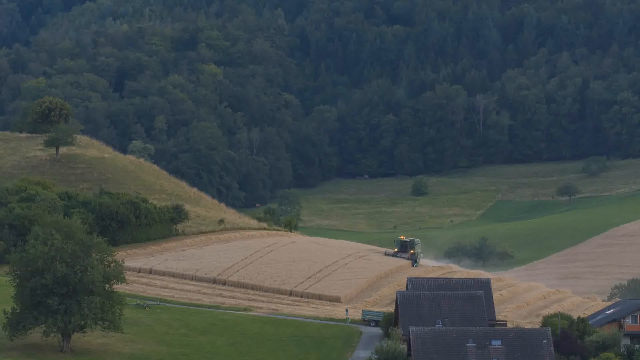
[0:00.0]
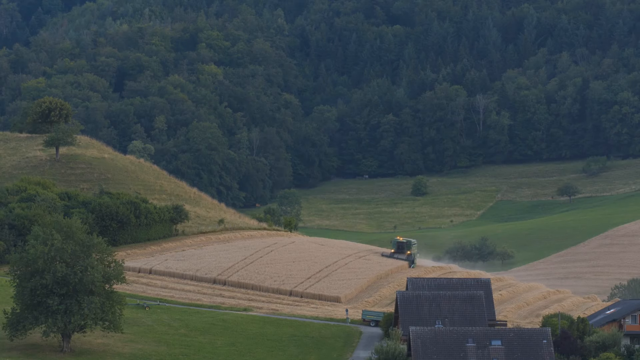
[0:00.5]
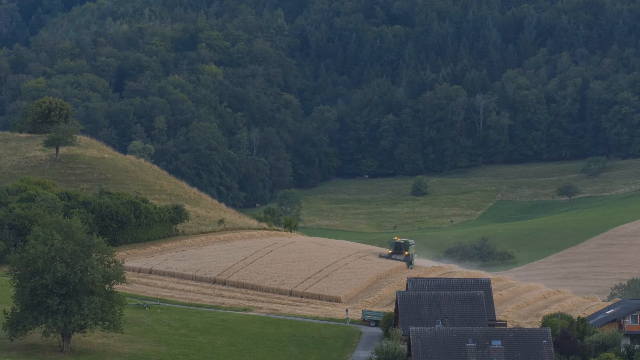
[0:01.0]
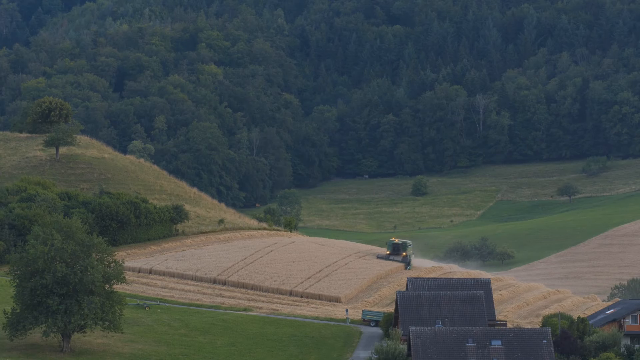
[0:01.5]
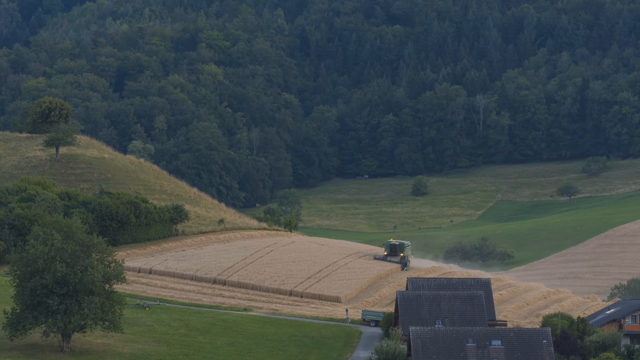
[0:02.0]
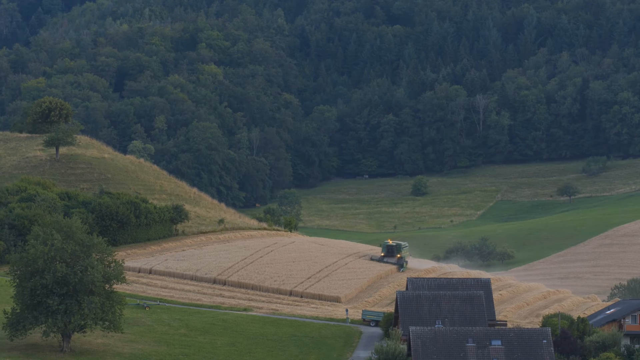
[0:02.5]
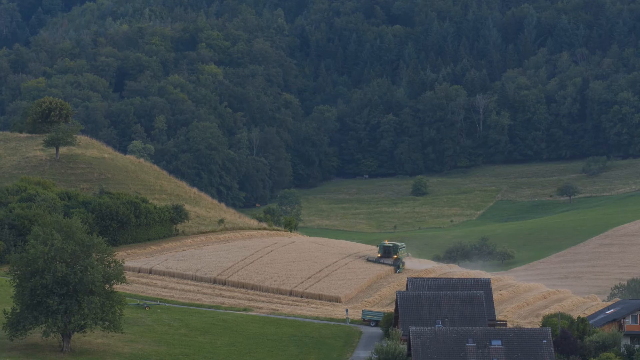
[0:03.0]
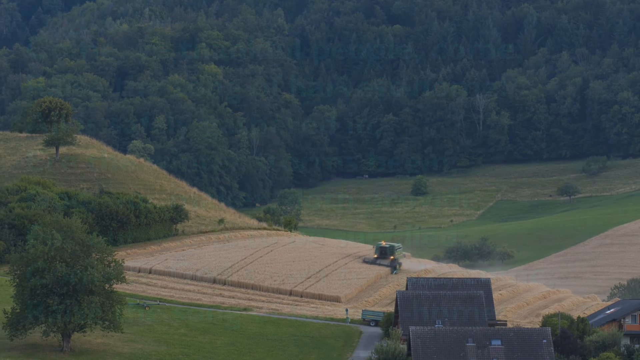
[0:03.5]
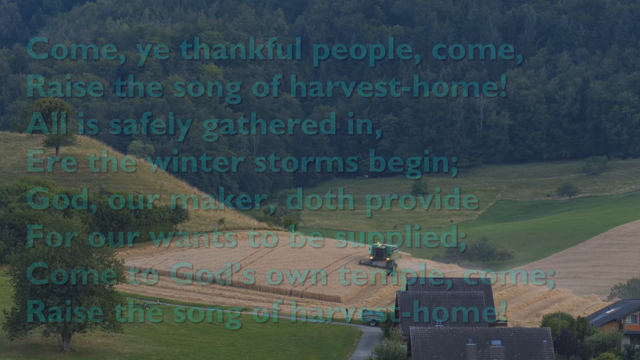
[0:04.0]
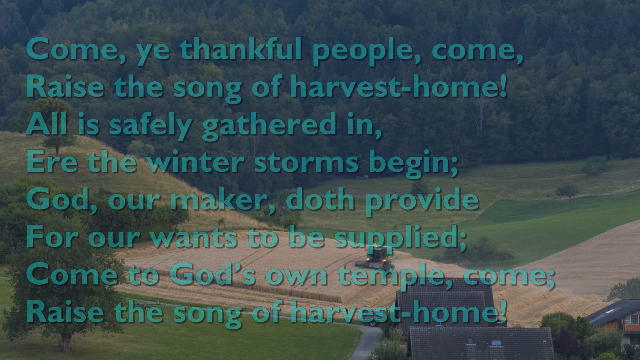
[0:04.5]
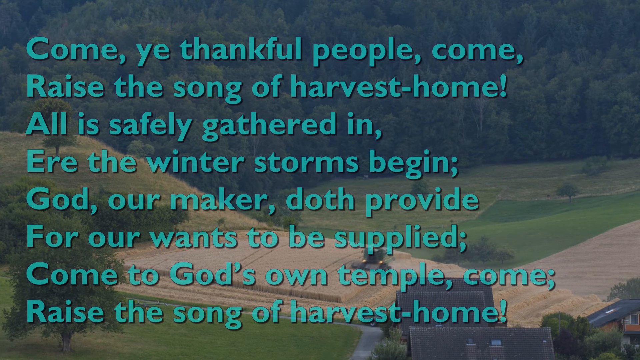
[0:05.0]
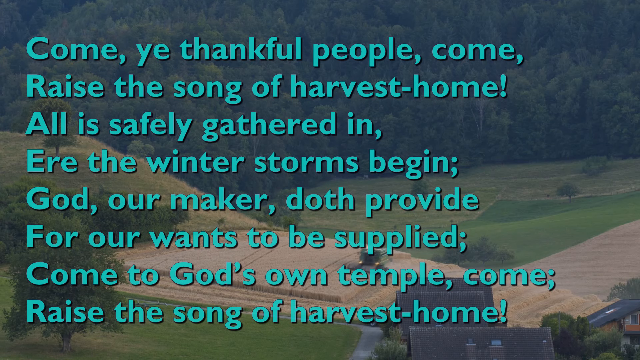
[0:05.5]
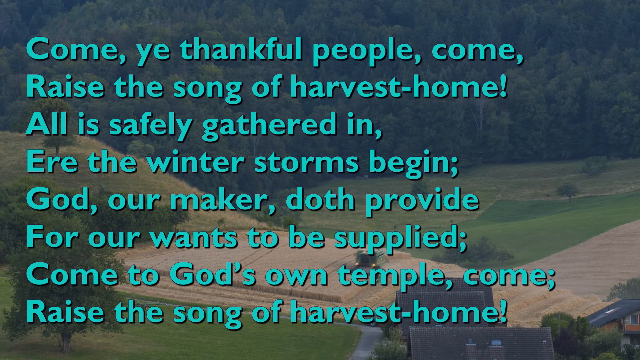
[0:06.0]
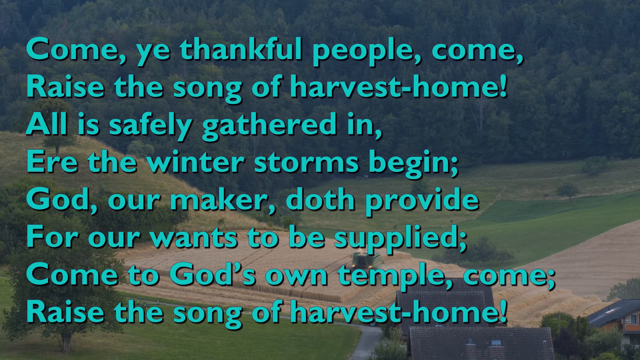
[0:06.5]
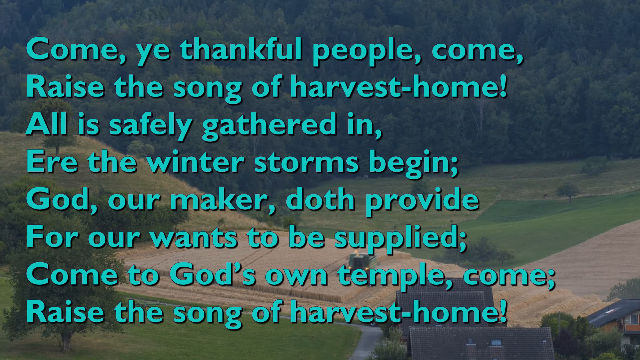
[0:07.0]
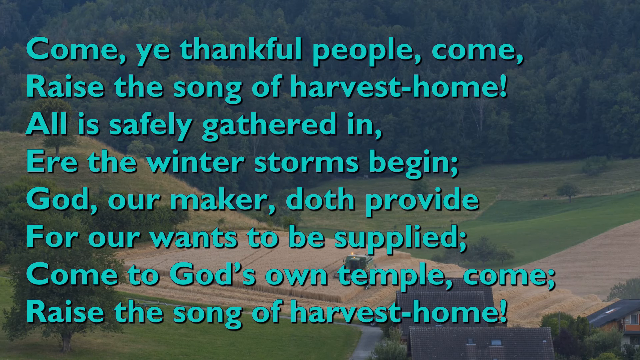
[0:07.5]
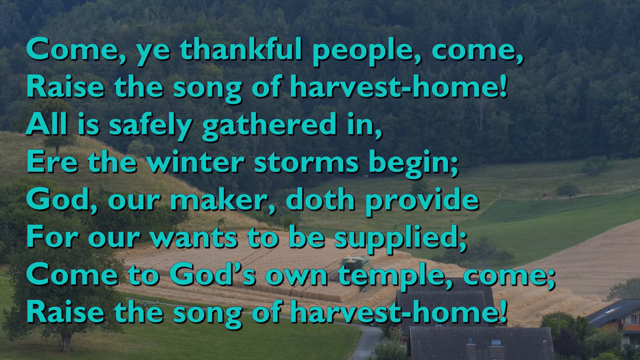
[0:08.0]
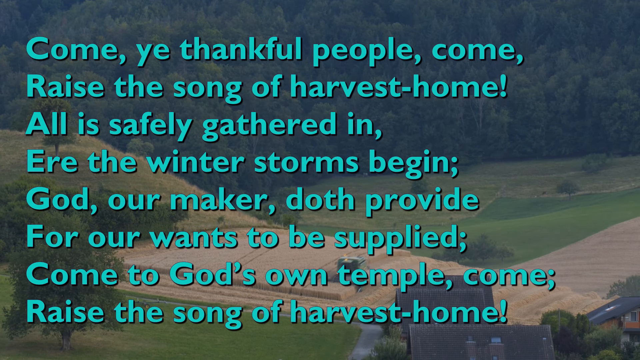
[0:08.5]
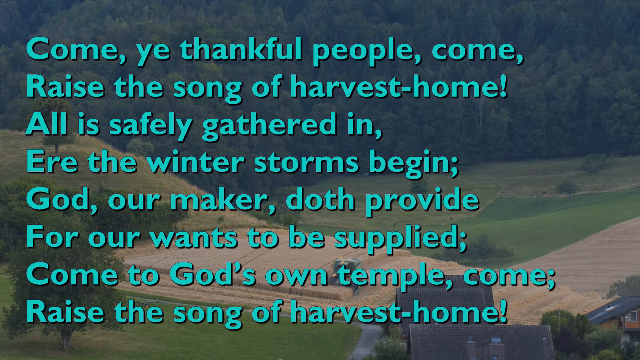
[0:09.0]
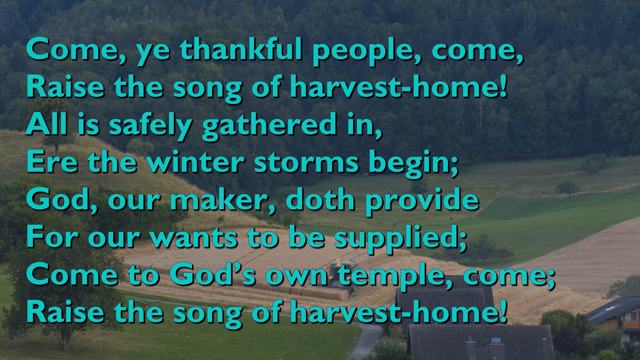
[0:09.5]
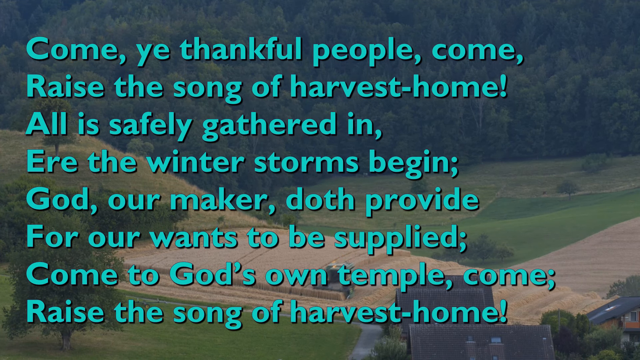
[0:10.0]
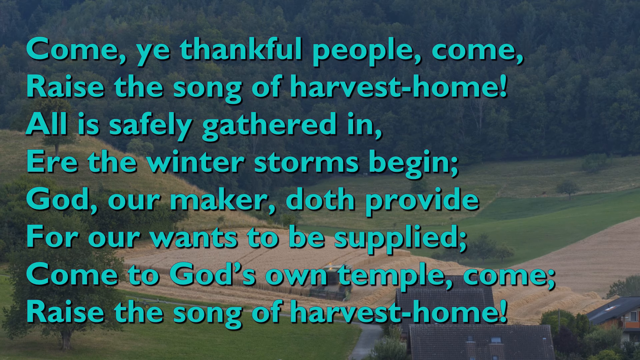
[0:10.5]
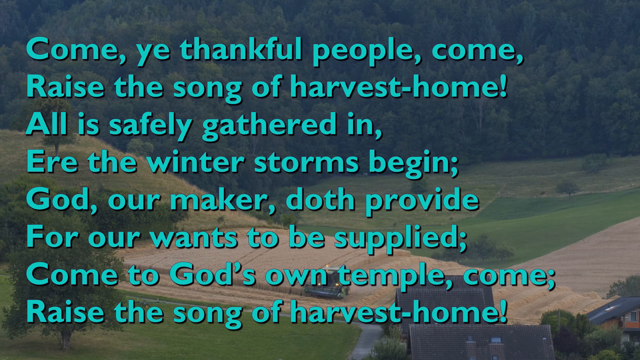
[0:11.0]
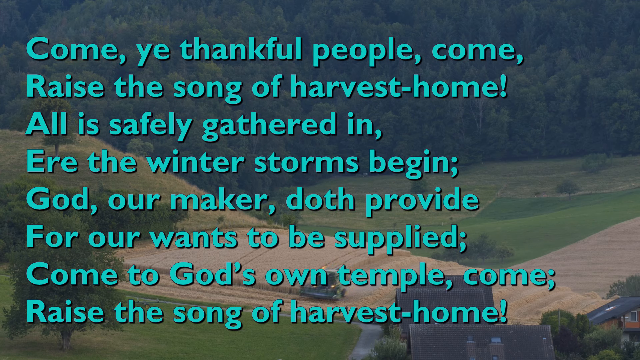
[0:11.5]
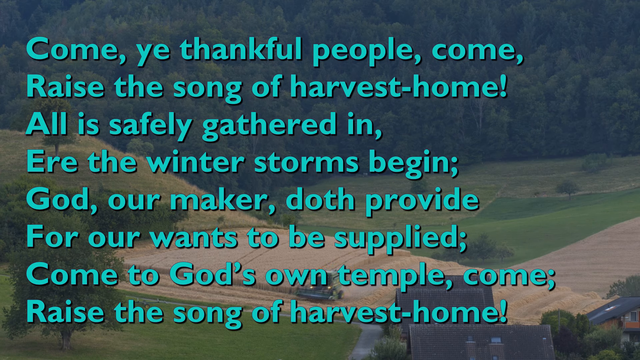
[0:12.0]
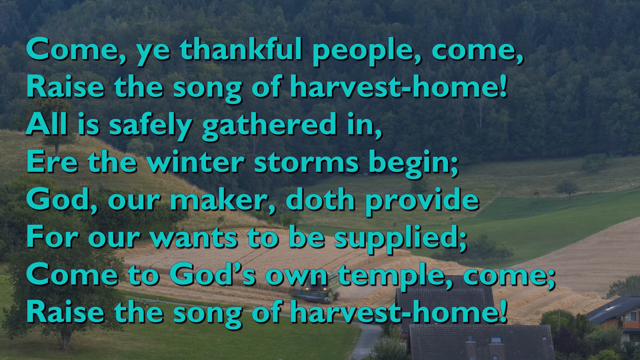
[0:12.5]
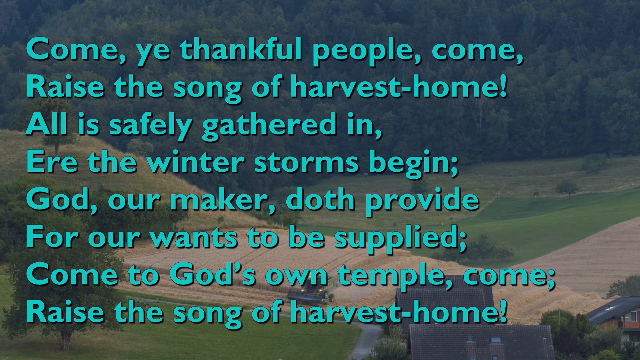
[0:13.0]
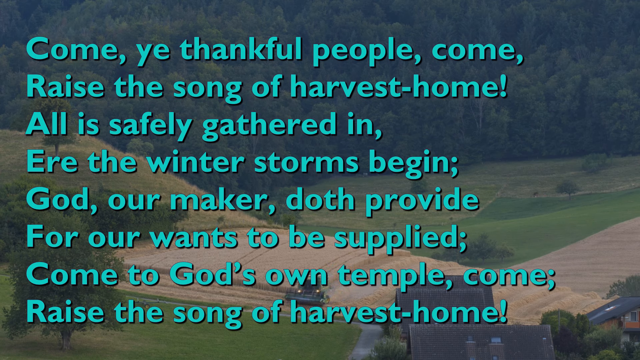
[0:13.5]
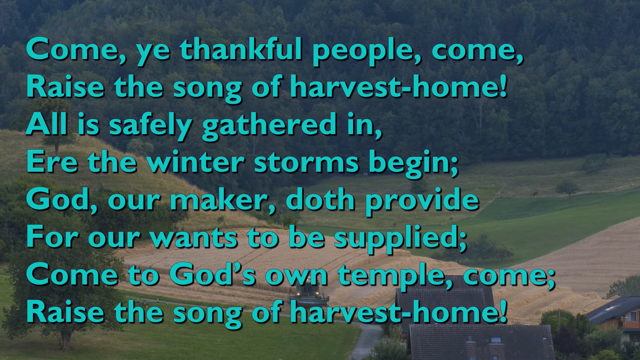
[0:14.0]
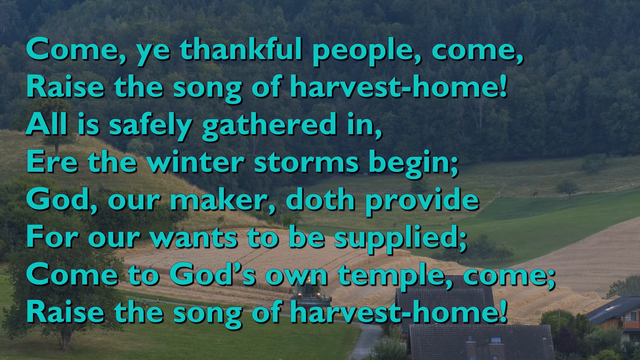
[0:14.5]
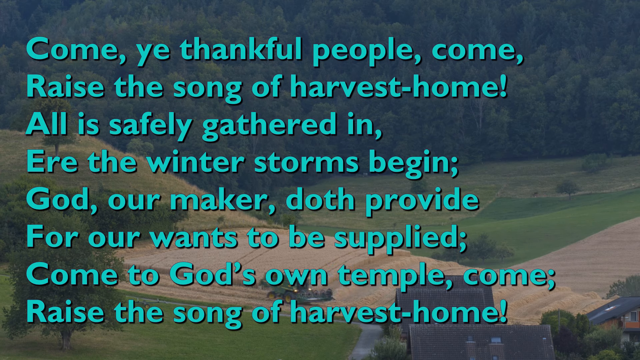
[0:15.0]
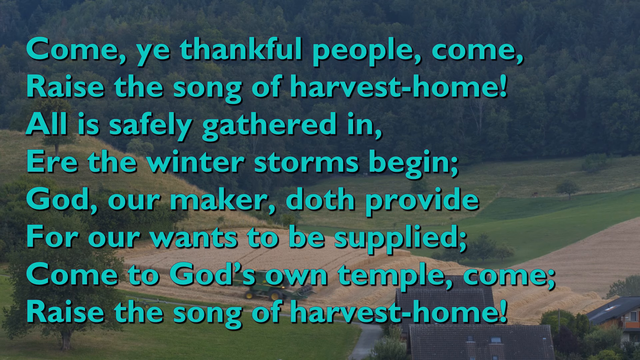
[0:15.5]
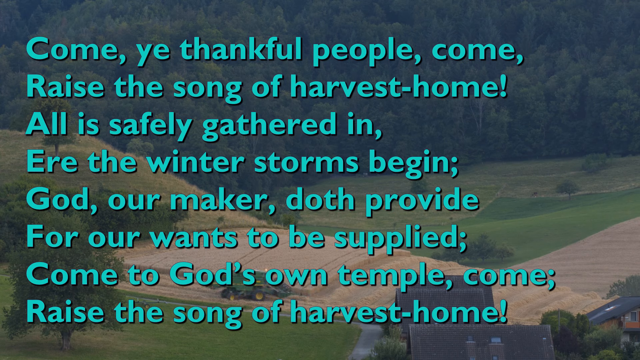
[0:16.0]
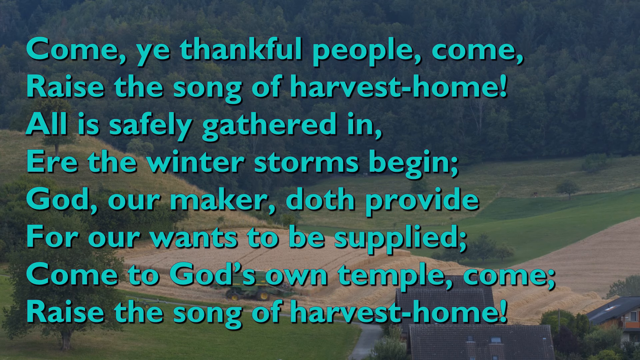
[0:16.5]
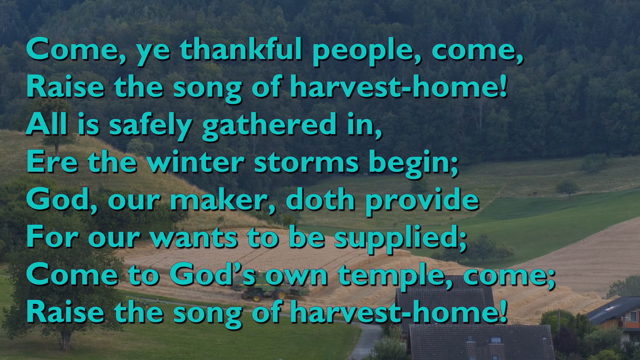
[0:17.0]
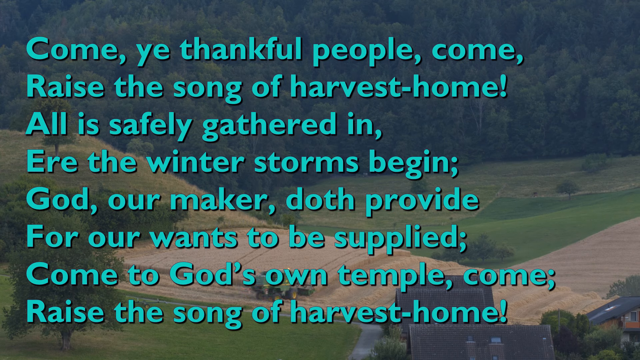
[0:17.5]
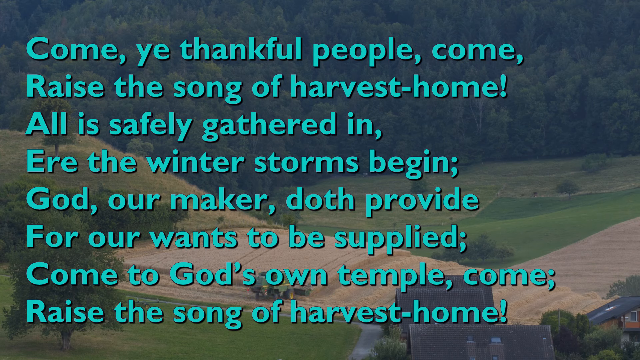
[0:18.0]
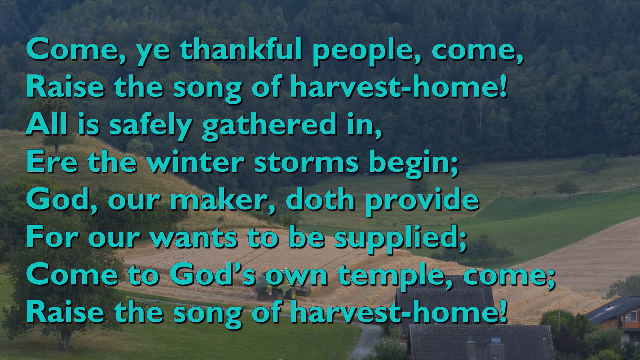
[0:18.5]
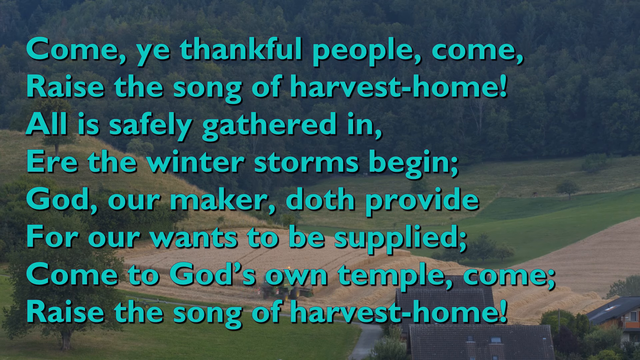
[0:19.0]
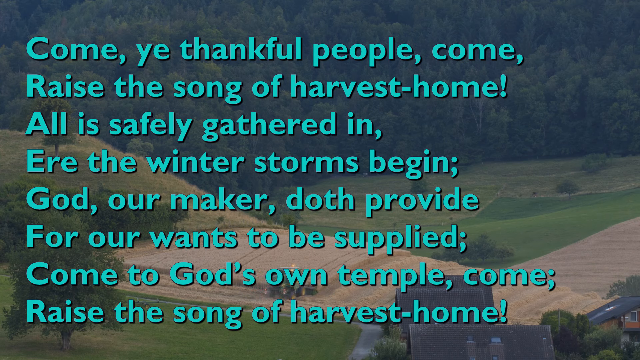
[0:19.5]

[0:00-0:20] A scene with pine trees shows what looks like a golf course with very fine turf or grass, plus another type of grass that is a lighter green. A big hill is filled with wheat, and a green and yellow machine is mowing down the wheat. A separate hill has a small pine tree on top of it; the landscape is filled with trees, grass and a wheat field. Across the screen the text reads: "Come ye thankful people come raise the song of harvest home. All is safely gathered in ere the winter storm begins. God, our maker, doth provide for our wants to be supplied, come to God's own temple come. Raise the song of harvest home."